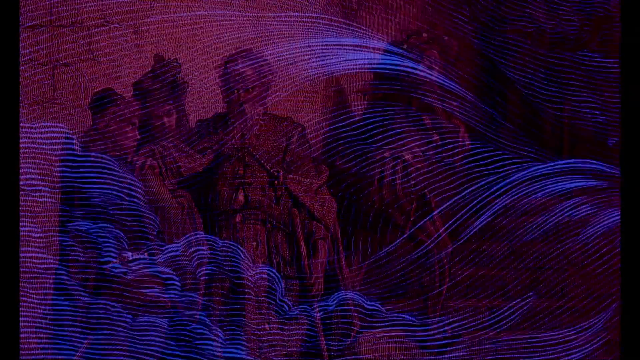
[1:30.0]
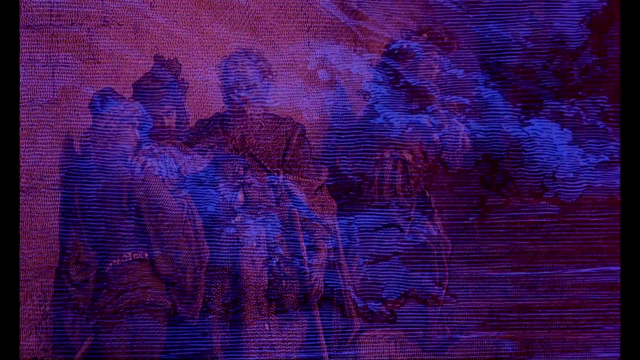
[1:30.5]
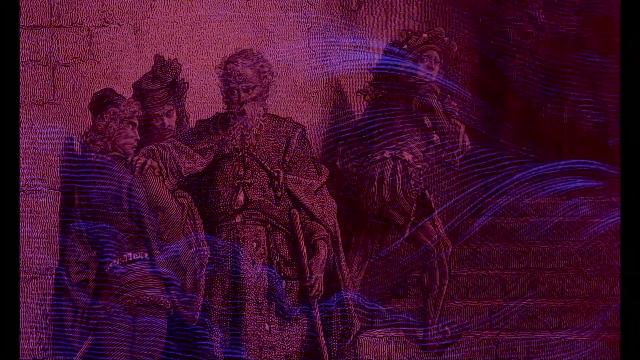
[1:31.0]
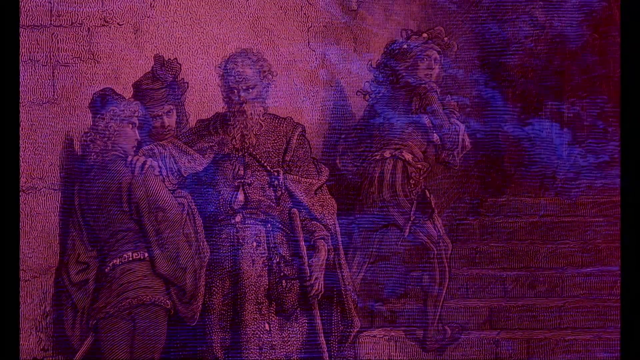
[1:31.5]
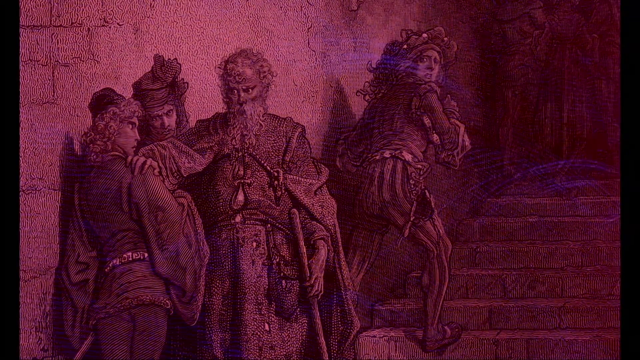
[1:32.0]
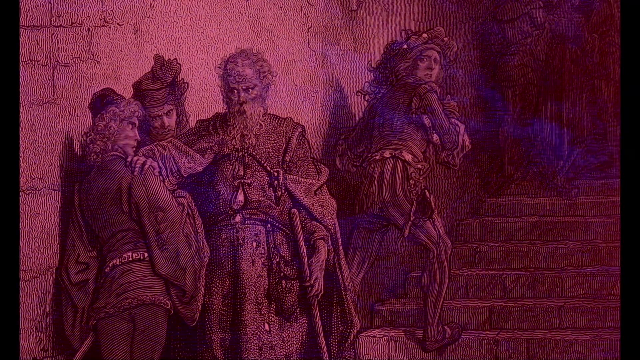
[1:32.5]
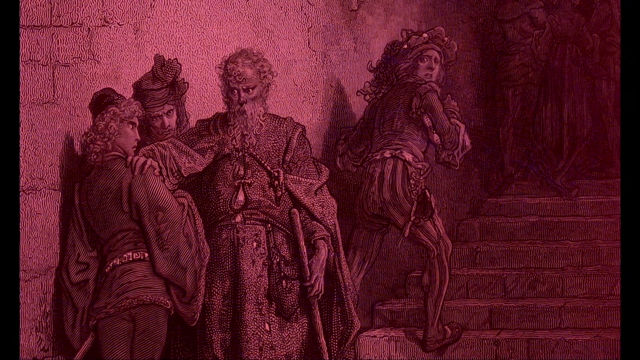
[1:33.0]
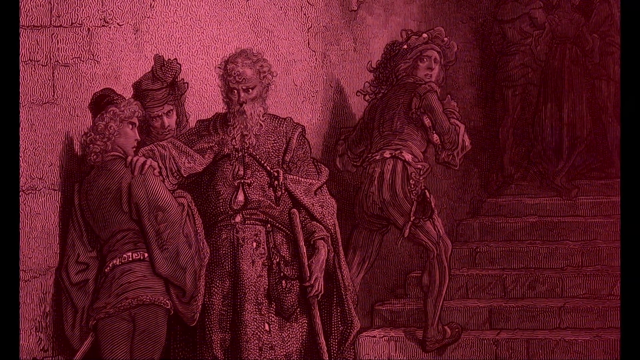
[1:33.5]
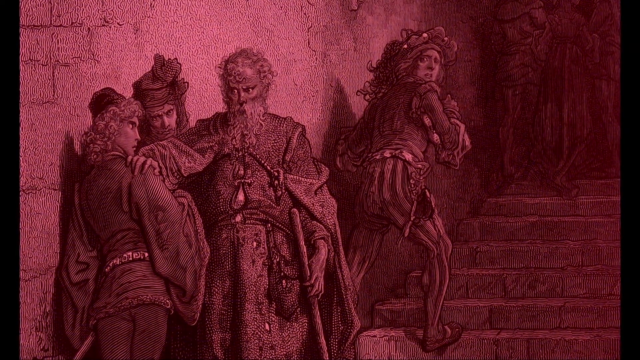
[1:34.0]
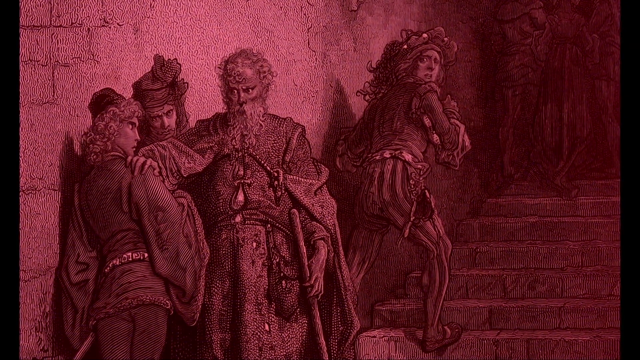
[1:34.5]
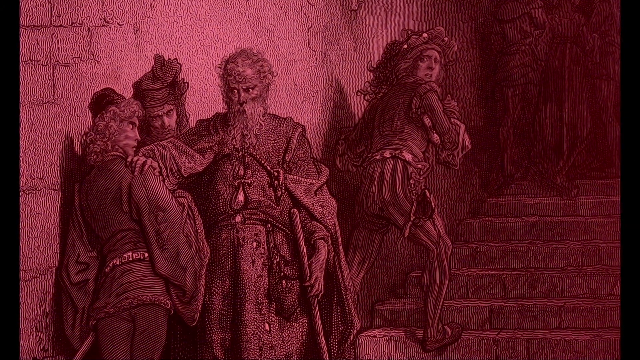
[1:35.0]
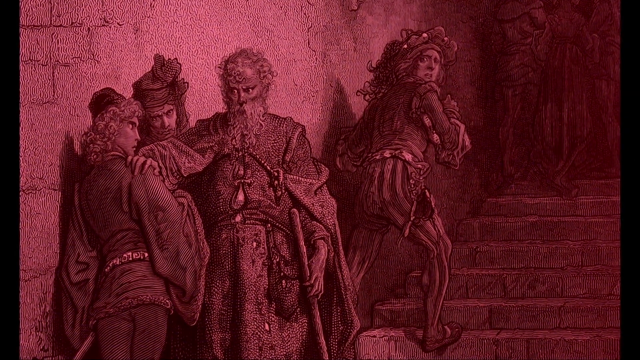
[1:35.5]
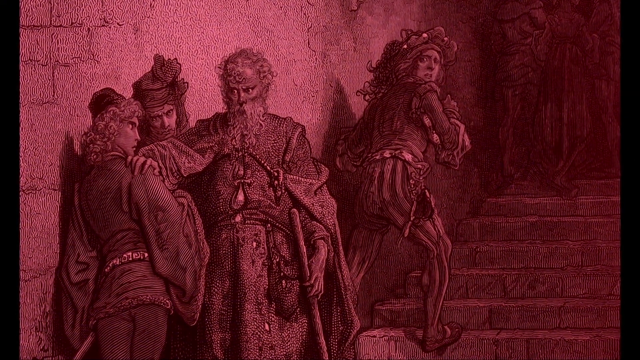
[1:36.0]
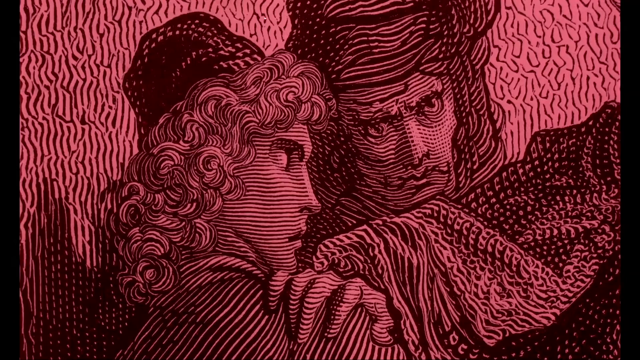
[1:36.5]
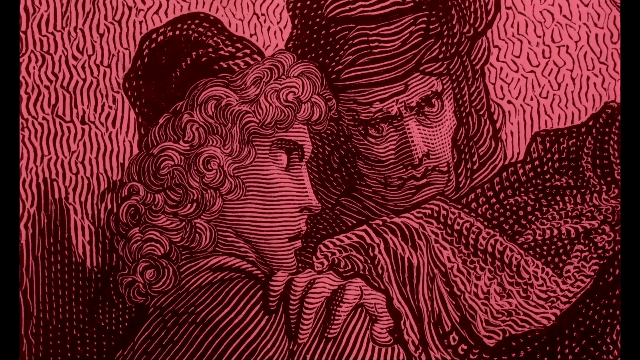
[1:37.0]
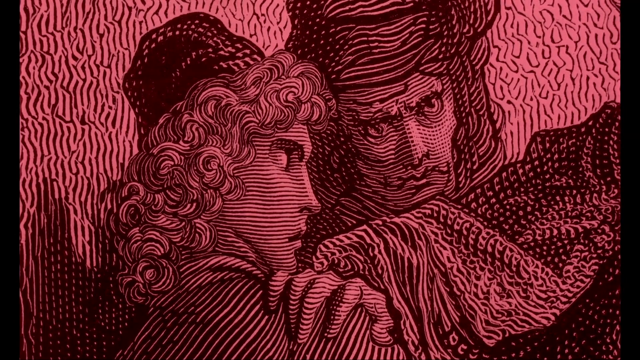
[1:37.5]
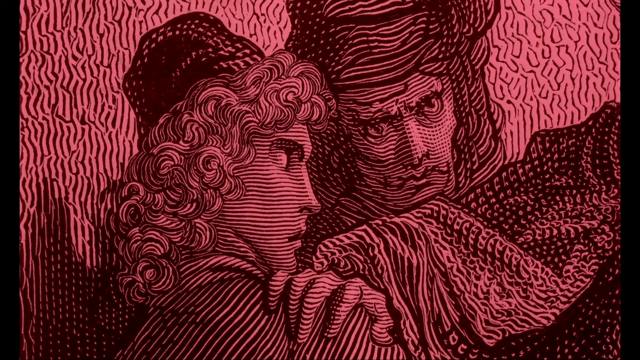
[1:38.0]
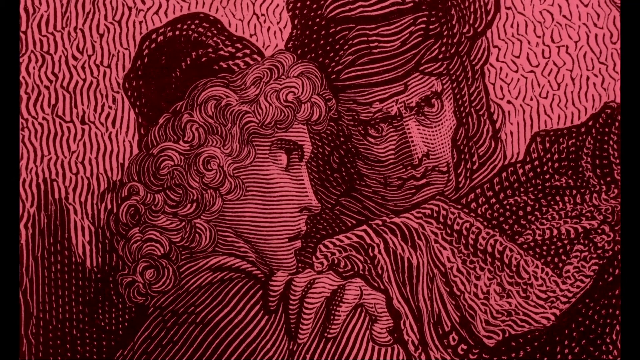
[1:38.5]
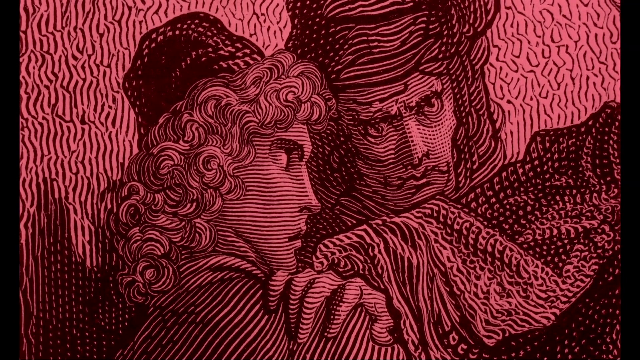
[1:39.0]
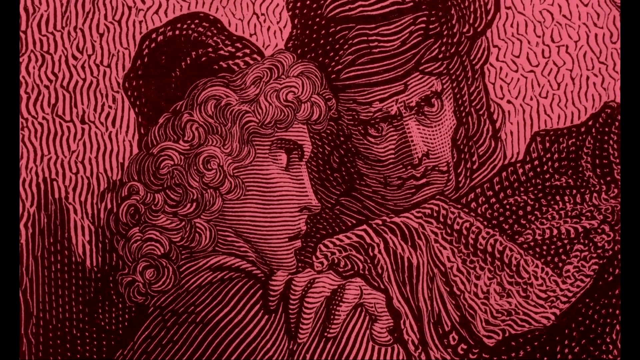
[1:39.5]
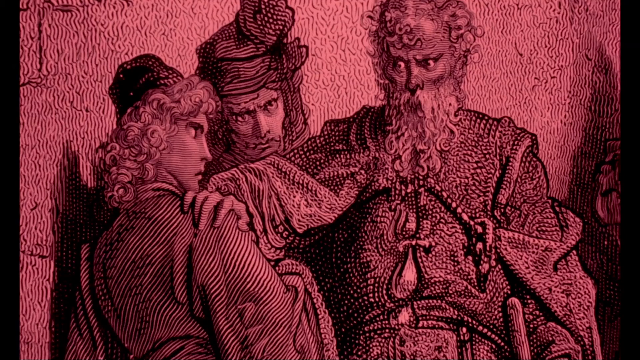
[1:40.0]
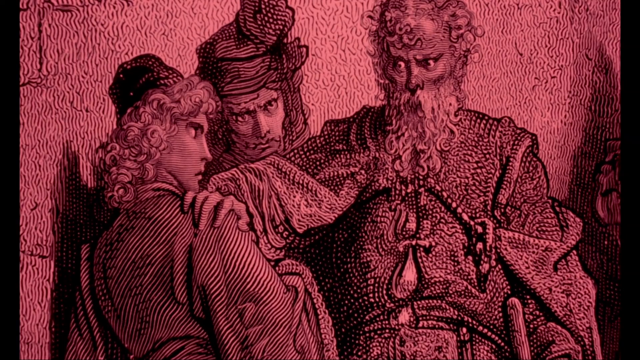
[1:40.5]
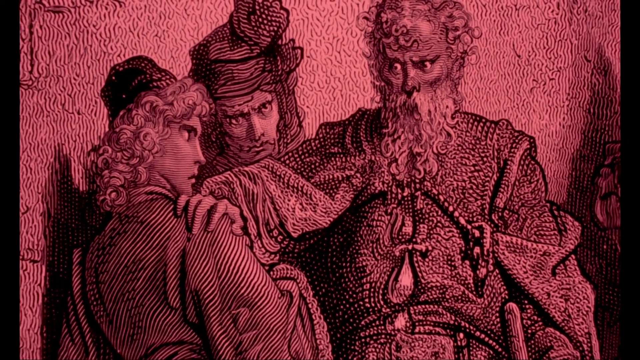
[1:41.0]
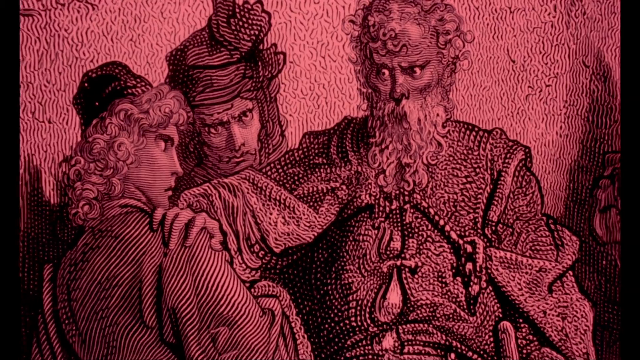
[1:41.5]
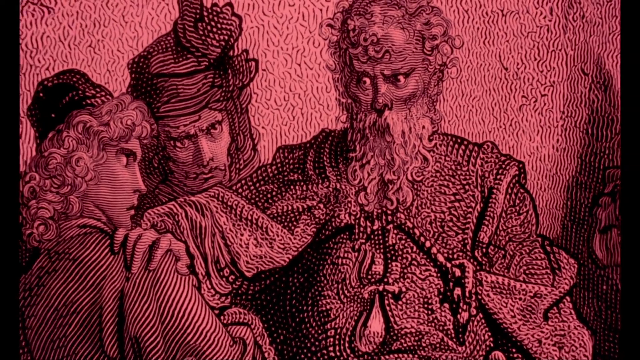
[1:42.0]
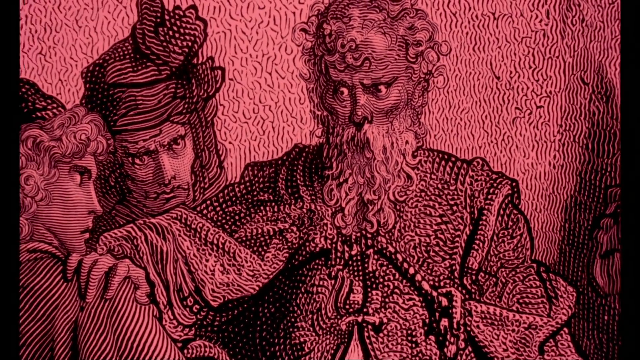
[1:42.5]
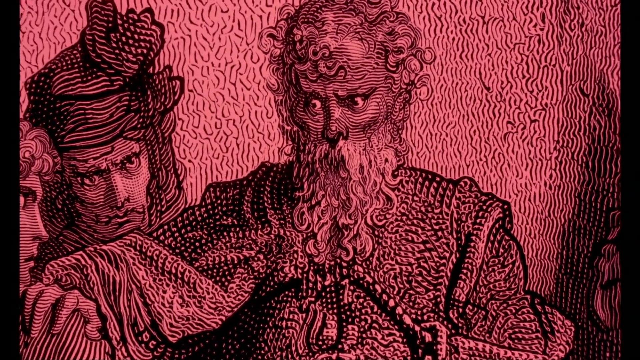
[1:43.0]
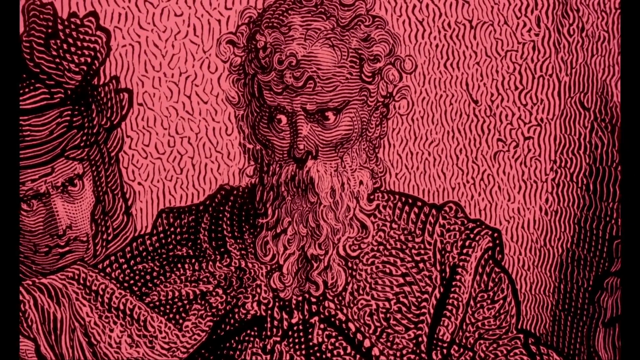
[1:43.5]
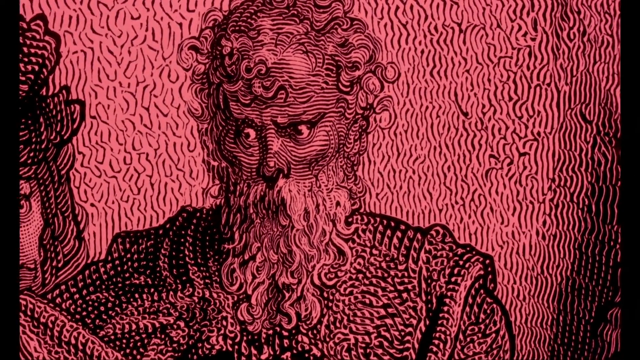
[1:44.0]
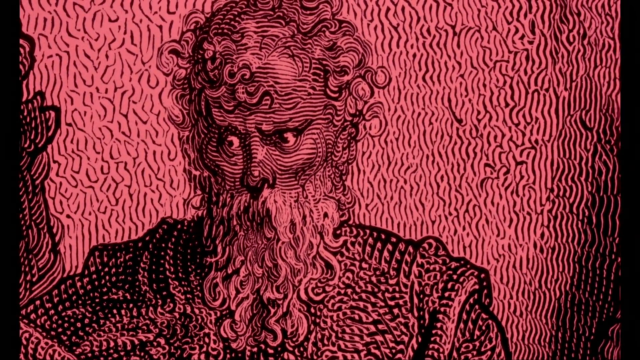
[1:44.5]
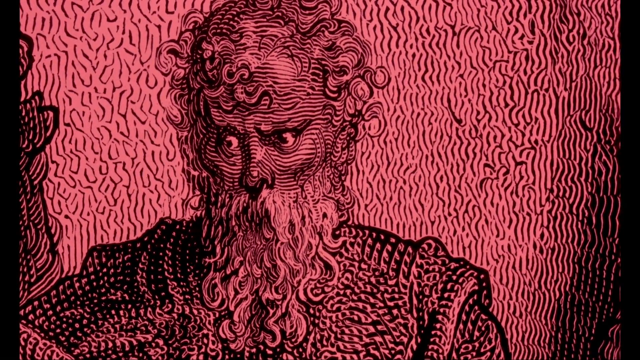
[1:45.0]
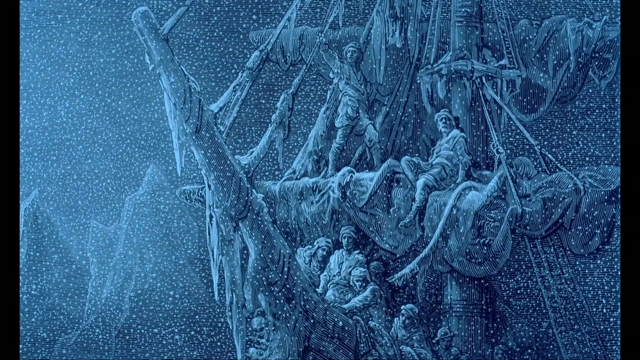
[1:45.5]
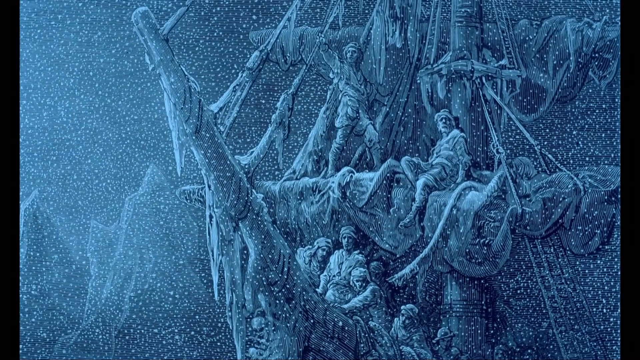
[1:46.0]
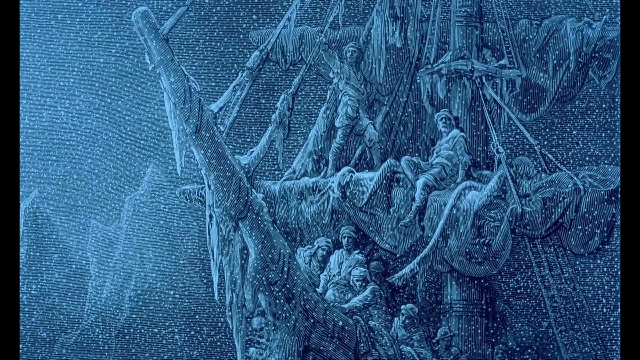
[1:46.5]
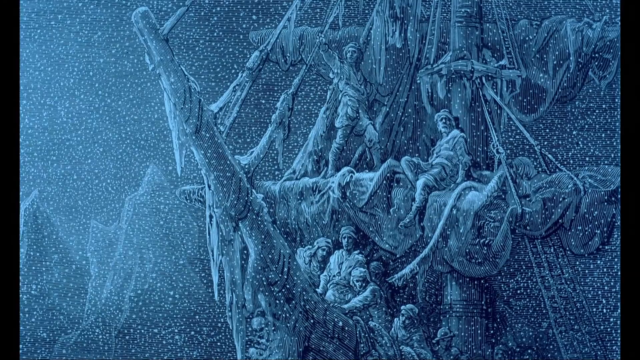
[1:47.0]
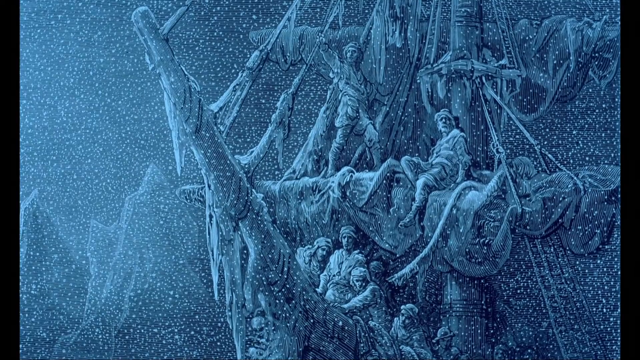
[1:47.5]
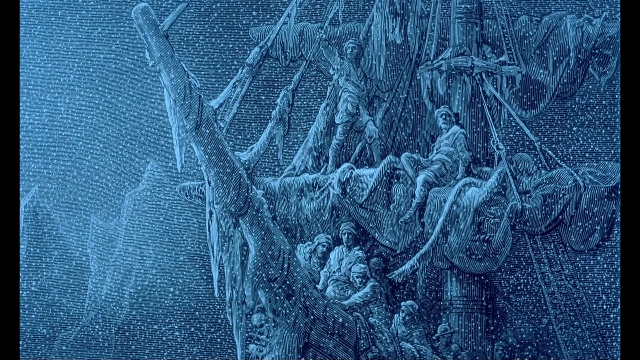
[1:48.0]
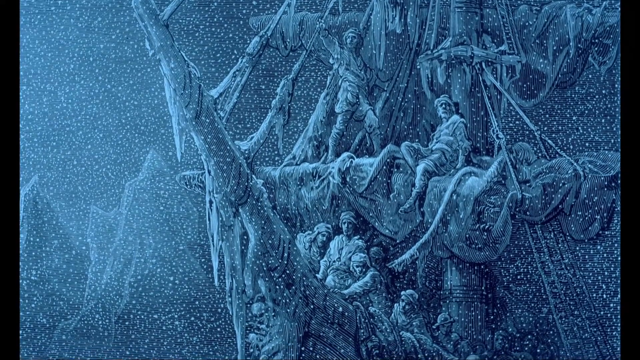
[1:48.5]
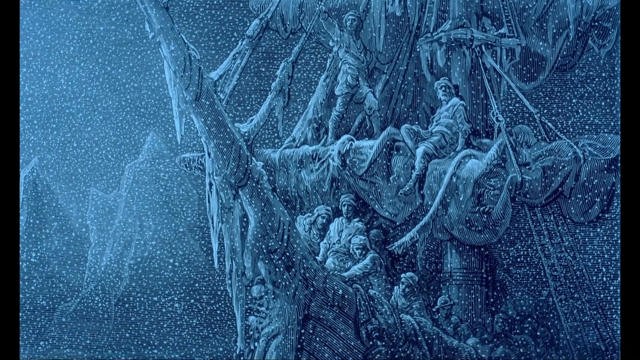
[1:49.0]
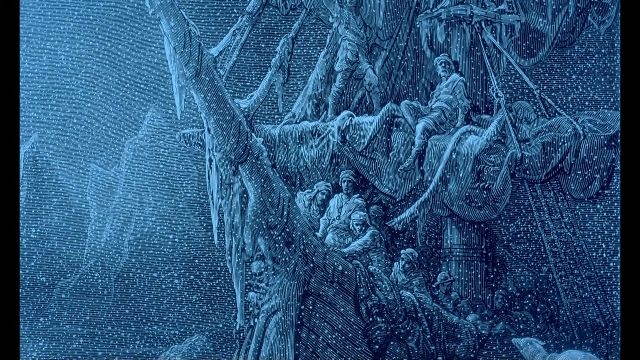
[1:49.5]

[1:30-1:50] The burgundy and red-like painting of four people standing is on screen. Almost transparent images of the earlier pictures of water are overlaid on top of it and cycle through as the camera zooms in slightly towards the people. The features become clearer and the painting becomes crisper overall. The scene transitions to a close-up of the same painting, focusing on the faces of the two people standing on the left-hand side. Another transition, still within the same painting, includes an elderly man with a long white beard, wild curly hair and intense eyes, his hand on the shoulder of one of the men from the left. The camera zooms in on the old man's face. The scene then transitions to a light blue and white color scheme, showing the mast of a ship with many men standing on the mast or below it. In the background are pointed objects that appear to be icebergs or mountains. There is snow, and icicles hang from the front of the ship. The camera begins to pan down.